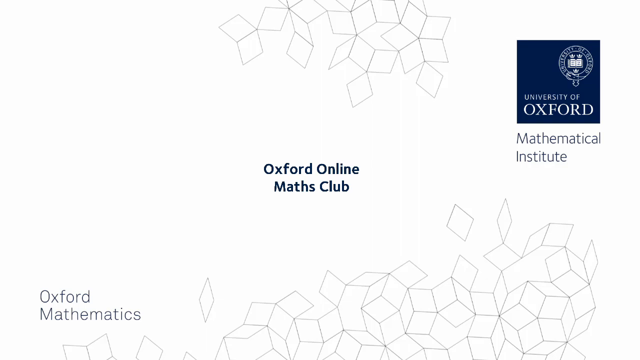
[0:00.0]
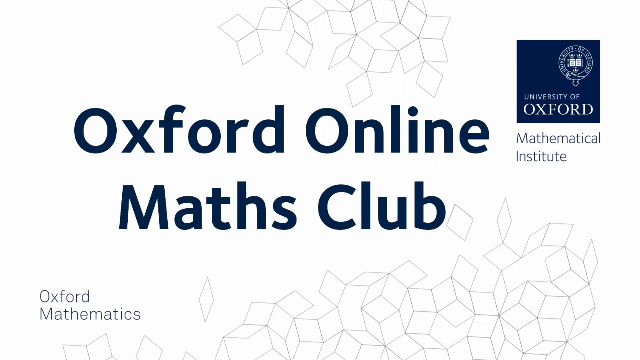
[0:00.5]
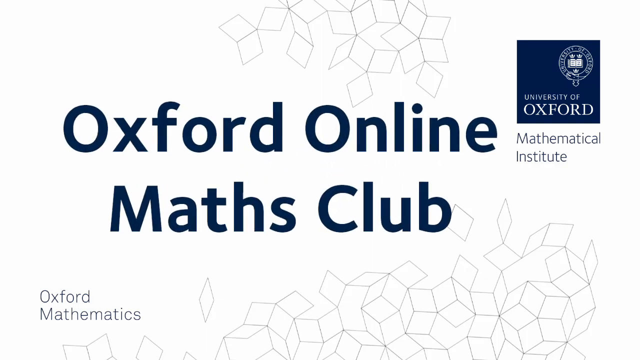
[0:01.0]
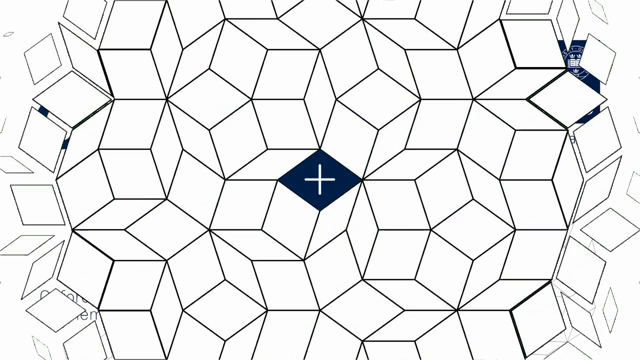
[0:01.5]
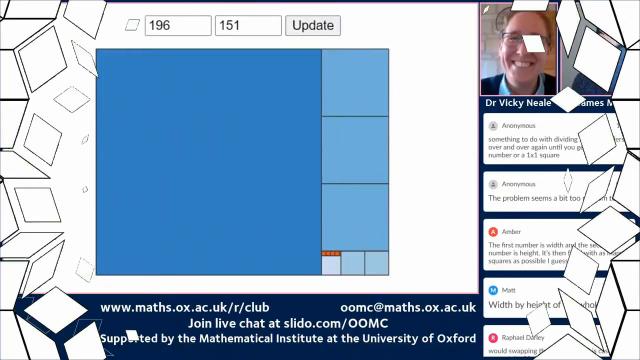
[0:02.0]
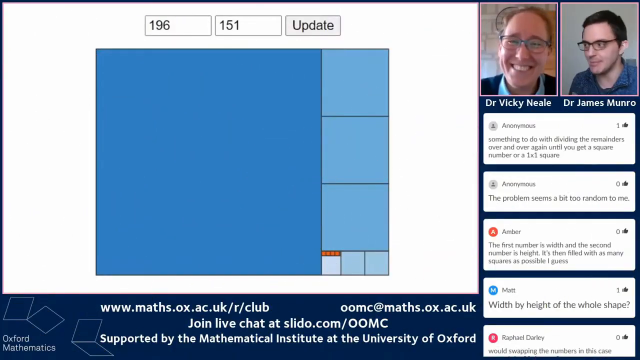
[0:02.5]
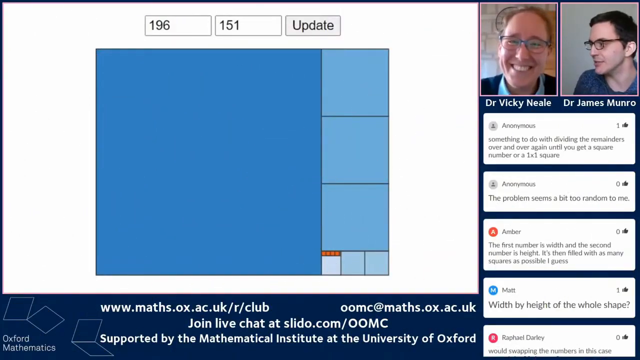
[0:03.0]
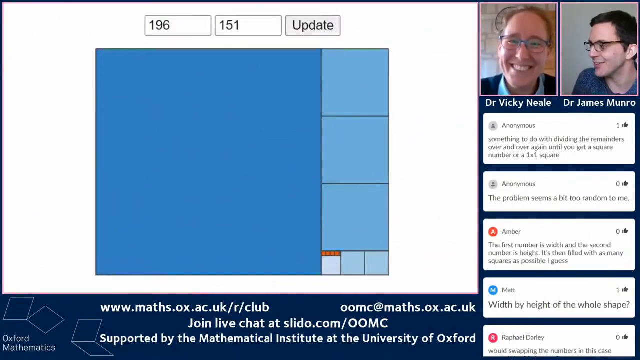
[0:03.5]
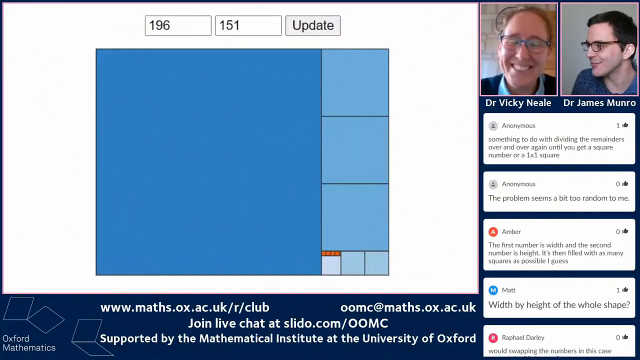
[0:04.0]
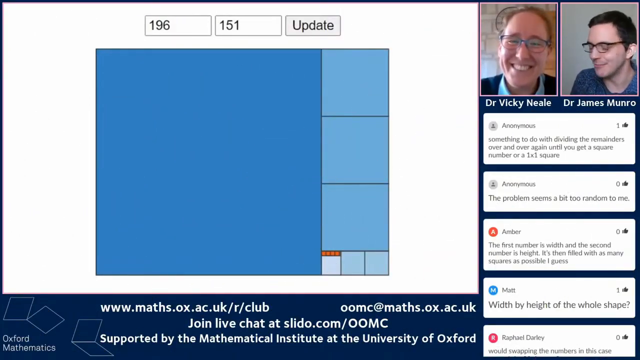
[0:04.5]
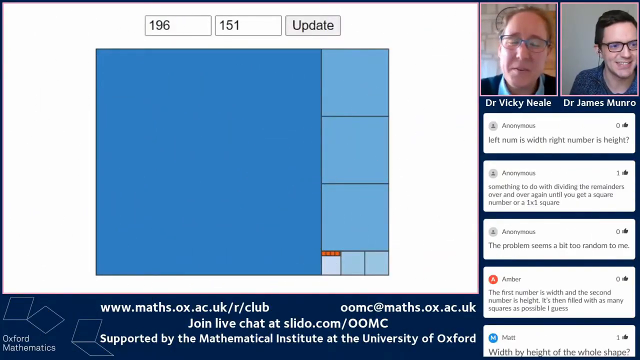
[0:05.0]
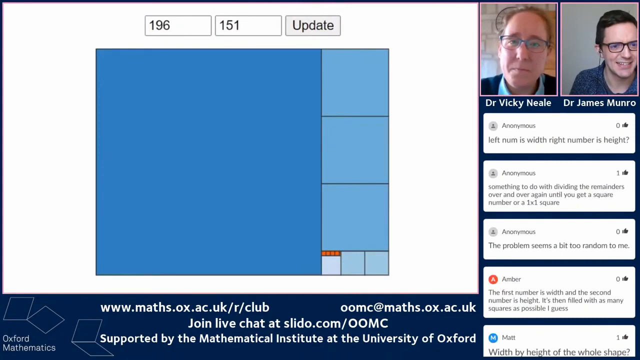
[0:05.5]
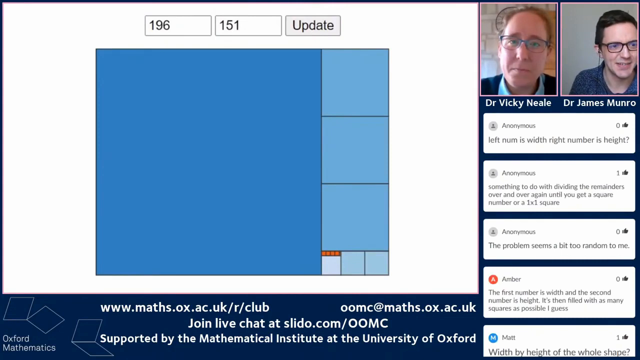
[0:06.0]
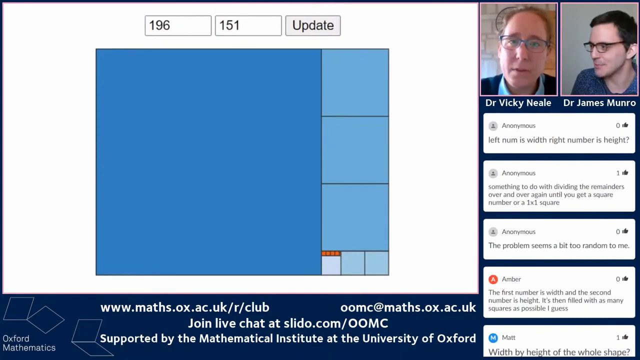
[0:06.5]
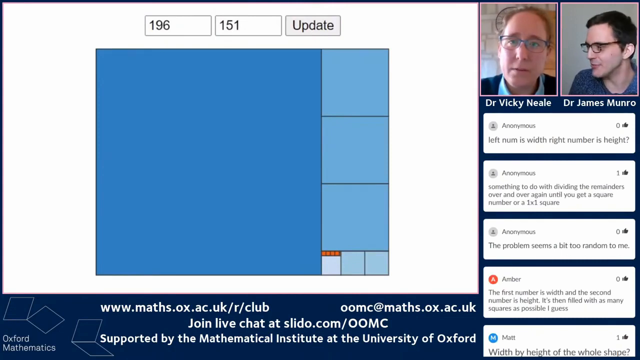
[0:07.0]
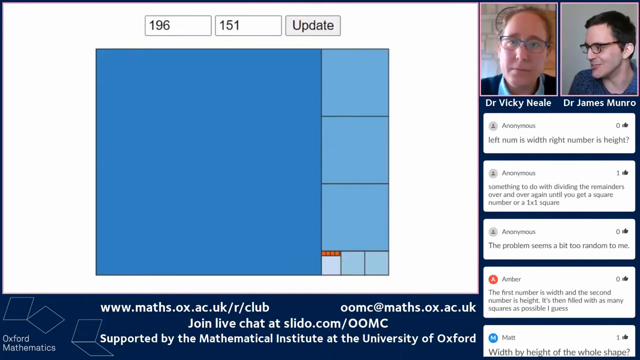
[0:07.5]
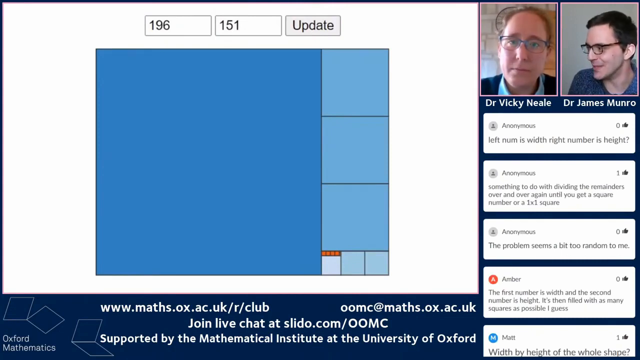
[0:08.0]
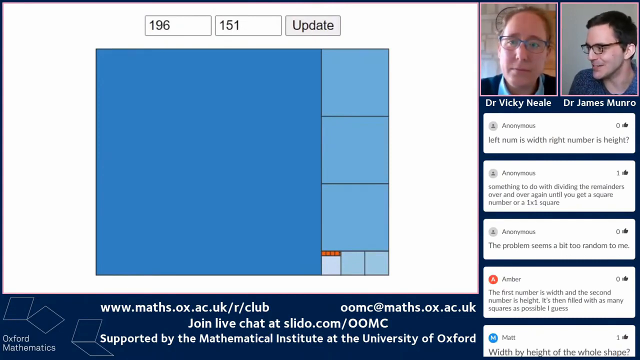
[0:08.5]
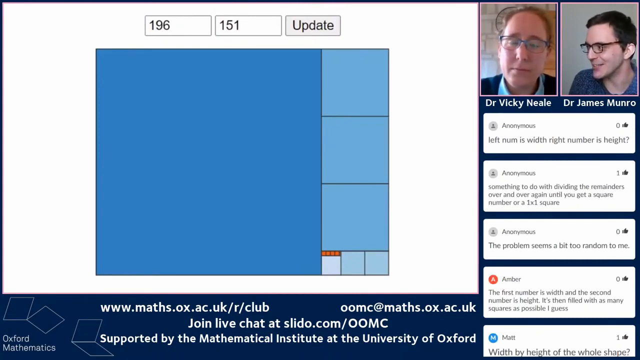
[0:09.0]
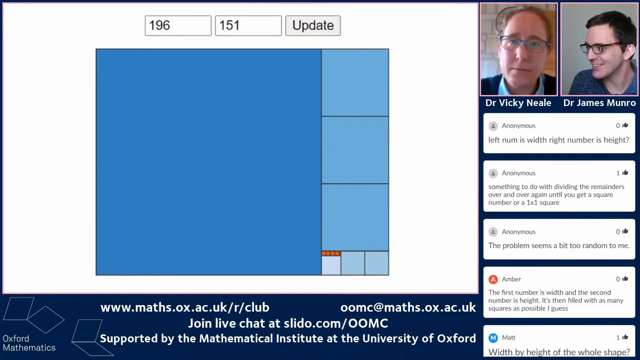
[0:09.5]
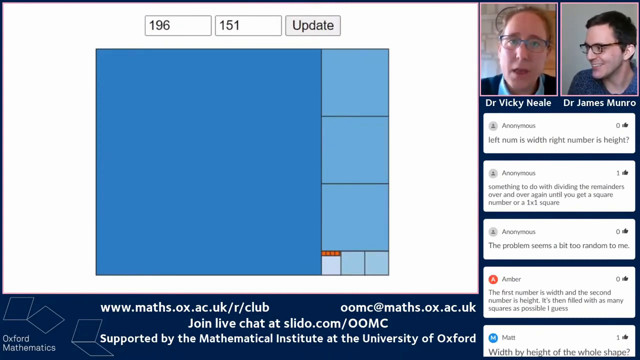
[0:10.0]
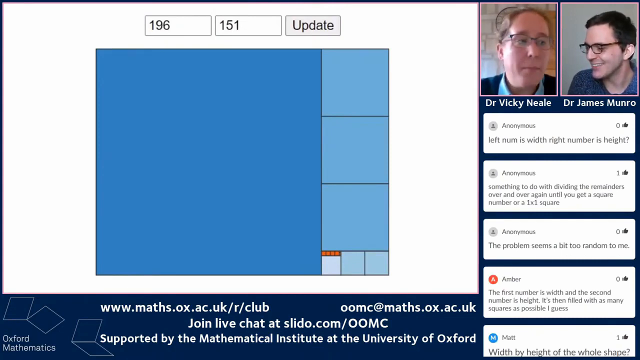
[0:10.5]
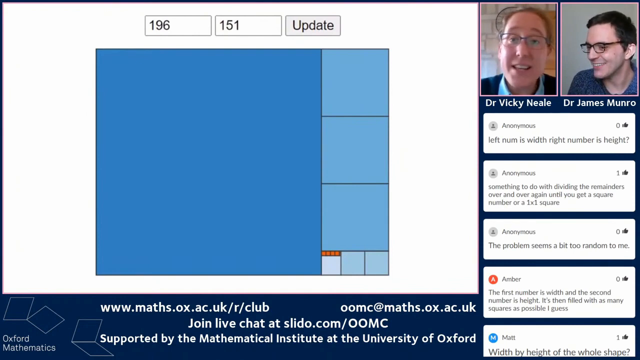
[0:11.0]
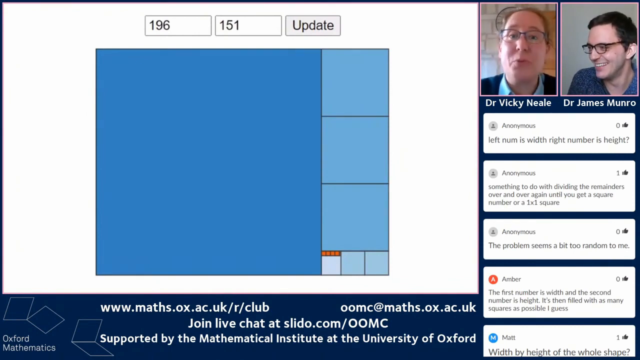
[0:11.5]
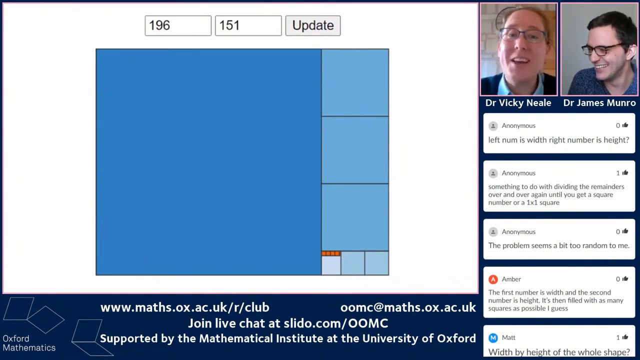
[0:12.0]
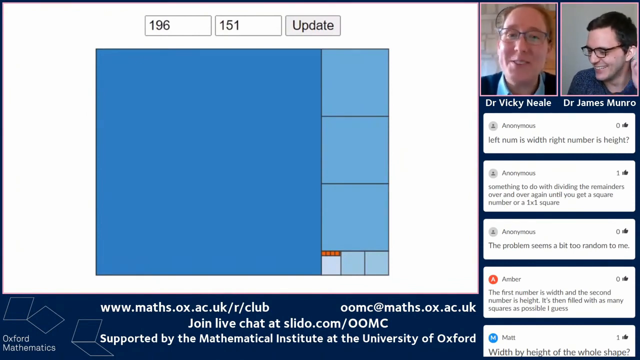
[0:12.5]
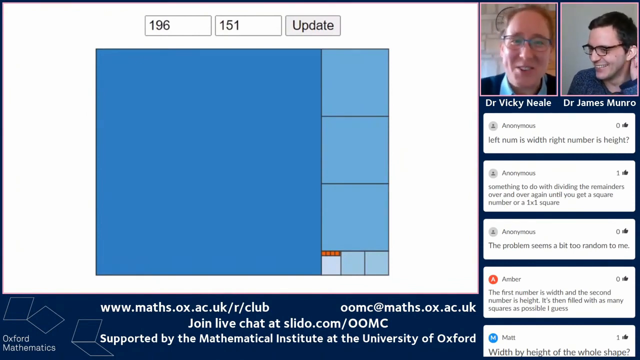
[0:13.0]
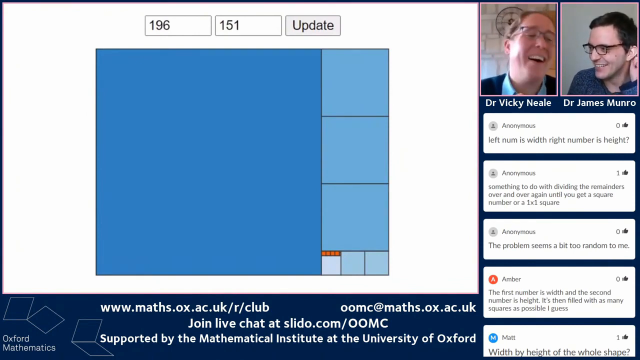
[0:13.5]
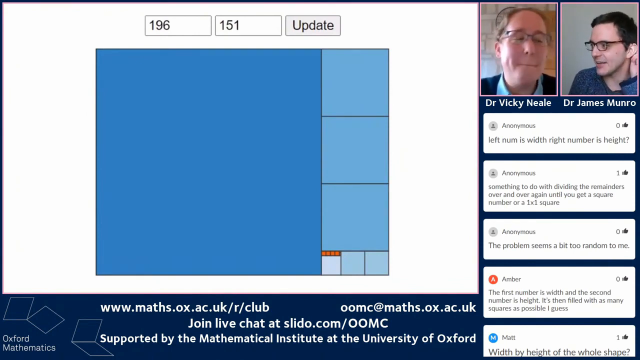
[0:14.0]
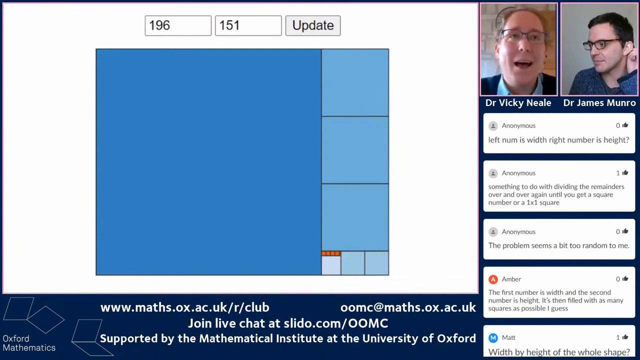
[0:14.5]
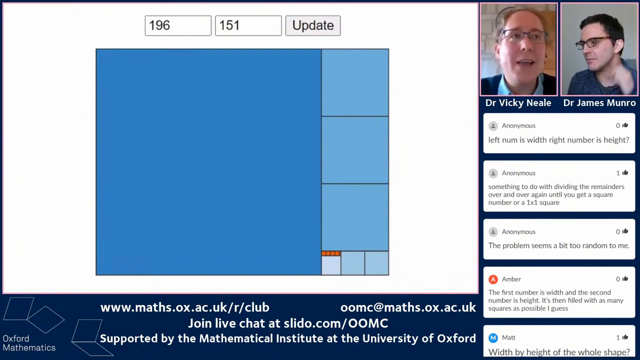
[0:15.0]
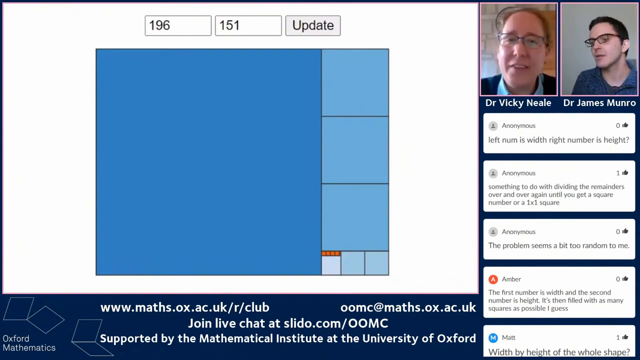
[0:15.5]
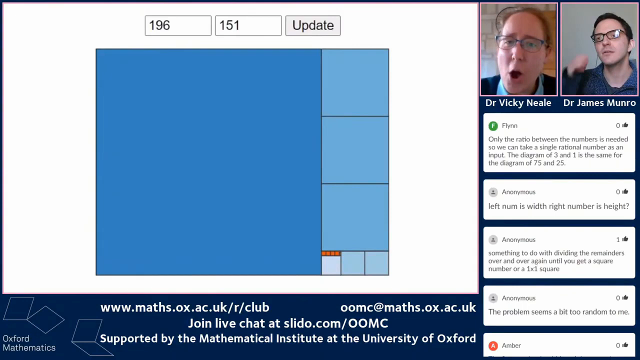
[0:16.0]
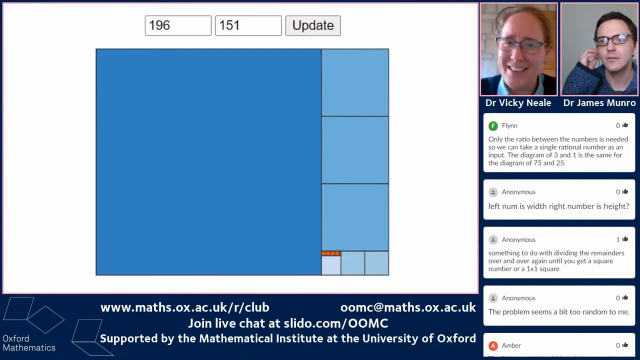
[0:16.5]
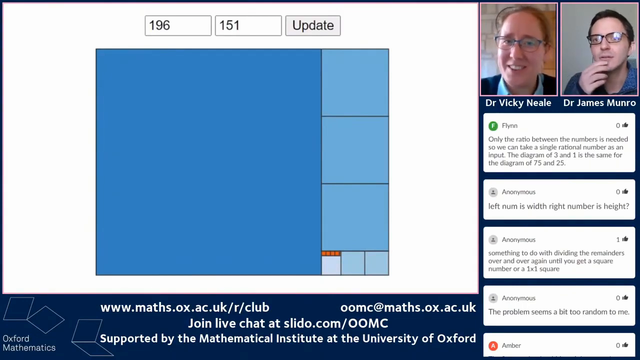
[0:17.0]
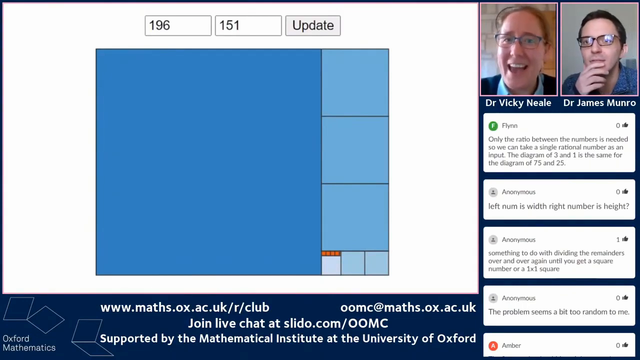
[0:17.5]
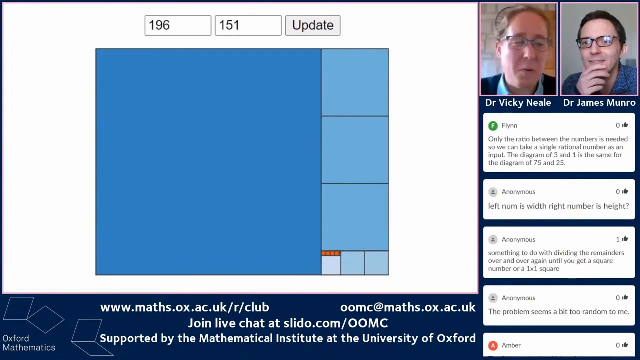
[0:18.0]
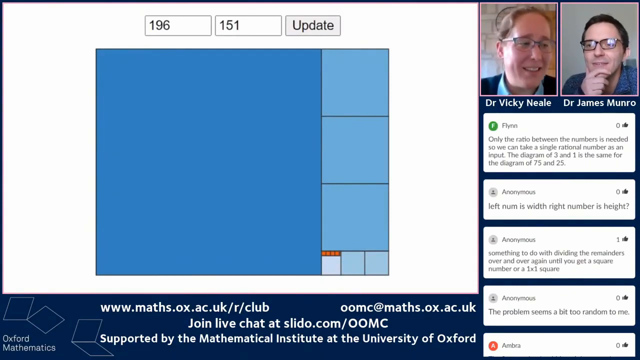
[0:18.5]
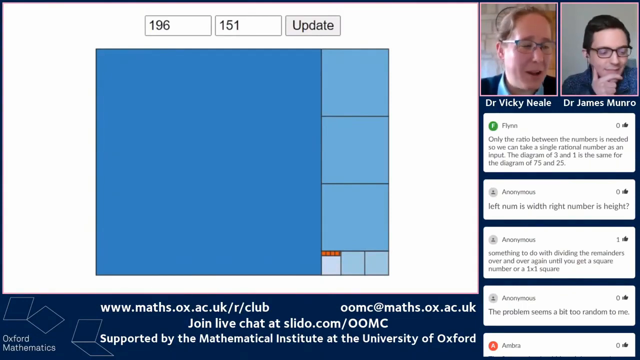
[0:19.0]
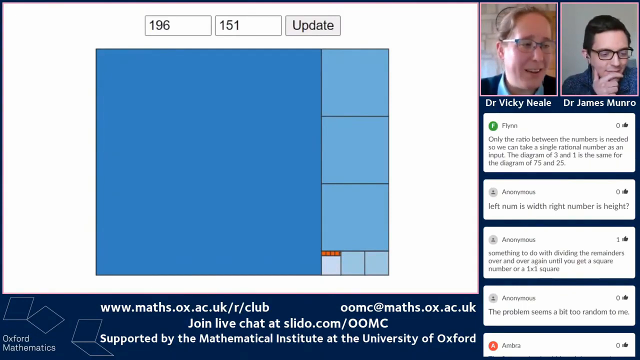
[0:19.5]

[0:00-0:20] The video opens on the Oxford online club, showing a video chat between two men: one is Dr. Ngo and the other is Dr. James Morrow. Behind the chat is an update showing numbers in blocks, 196 and 151. Below, their conversation appears in writing as they talk. Below the video is their website address, "www.meds.ox.ac.uk", along with "join live chat" and information on what to do to join the club. The two men are chatting on the Oxford online club, which is for a mathematical institution, the University of Oxford online maths club.